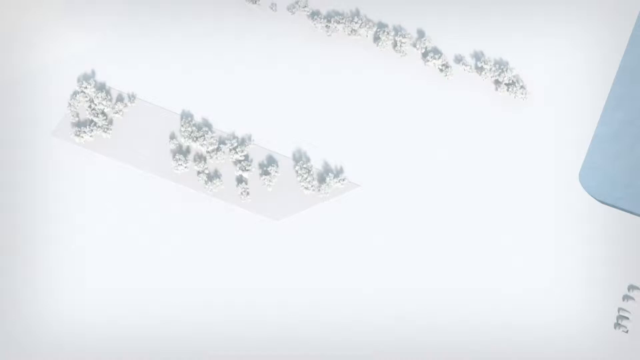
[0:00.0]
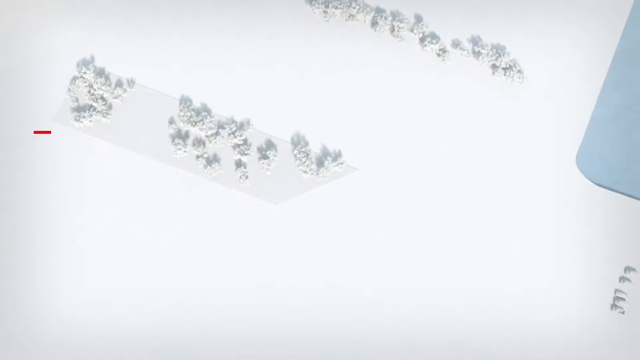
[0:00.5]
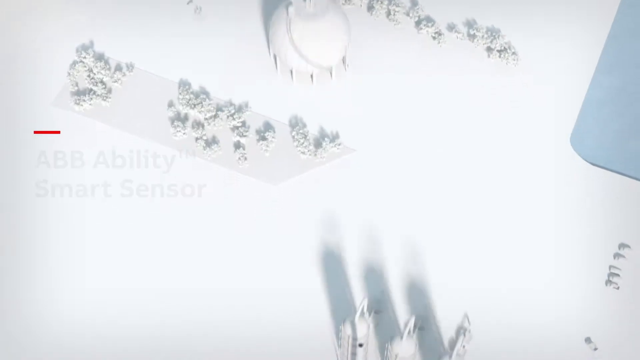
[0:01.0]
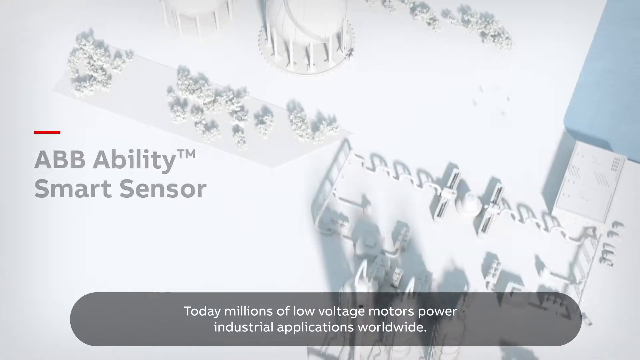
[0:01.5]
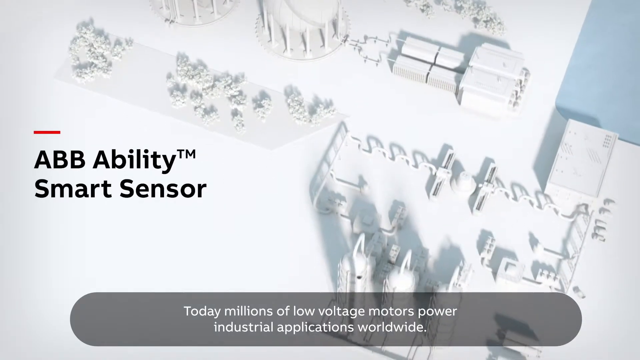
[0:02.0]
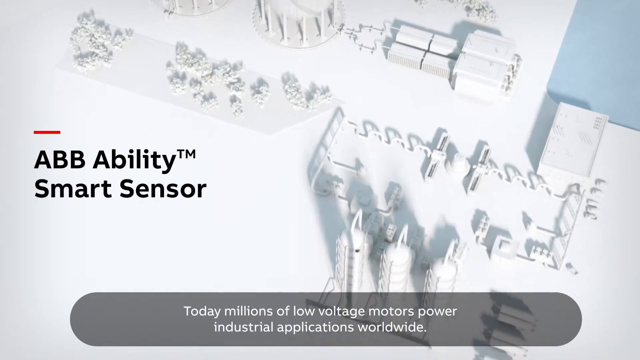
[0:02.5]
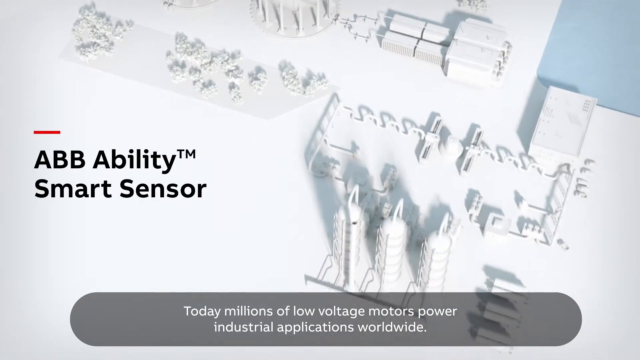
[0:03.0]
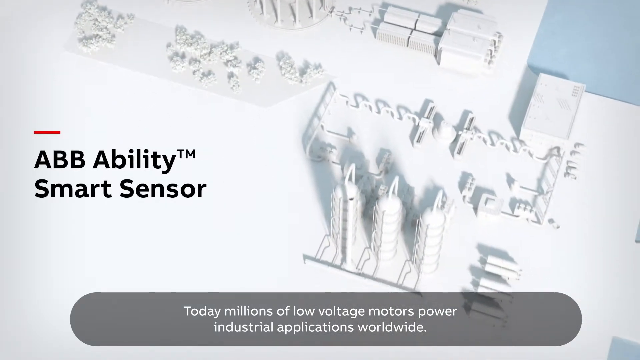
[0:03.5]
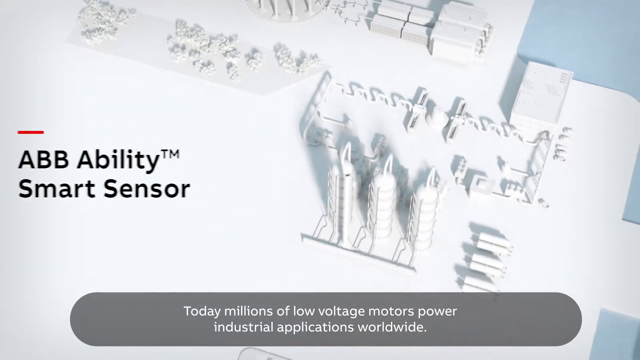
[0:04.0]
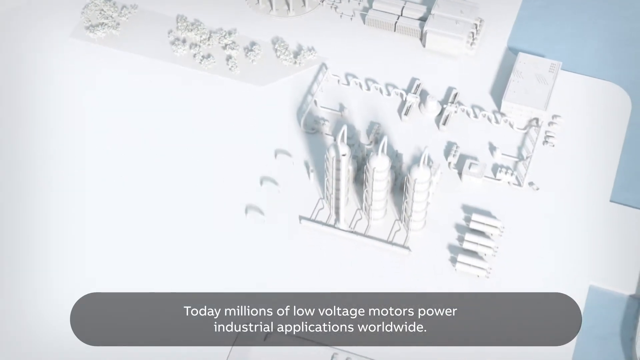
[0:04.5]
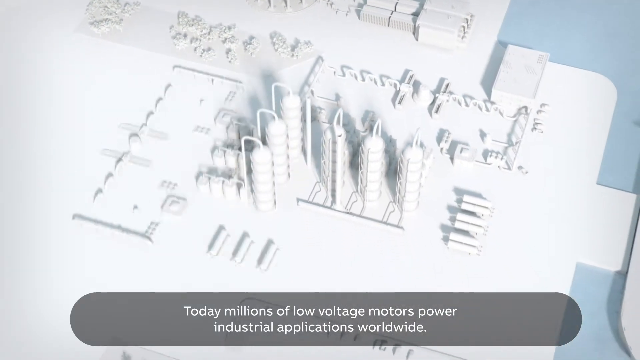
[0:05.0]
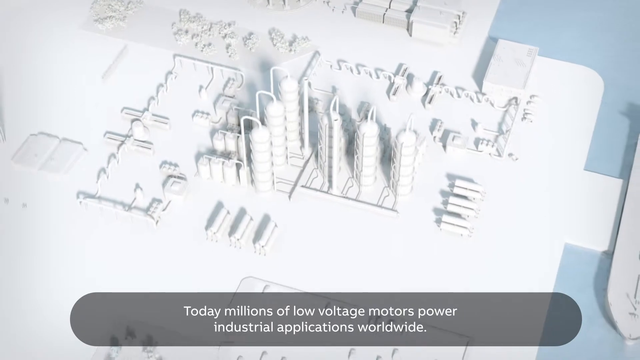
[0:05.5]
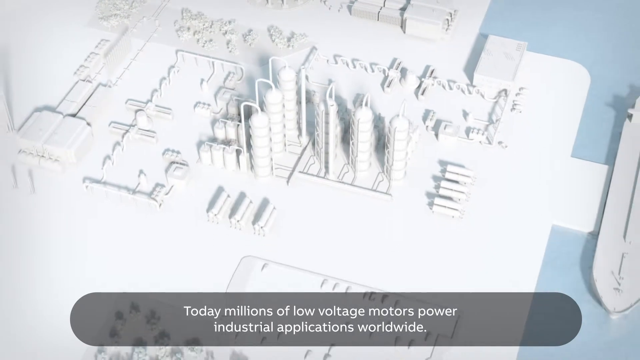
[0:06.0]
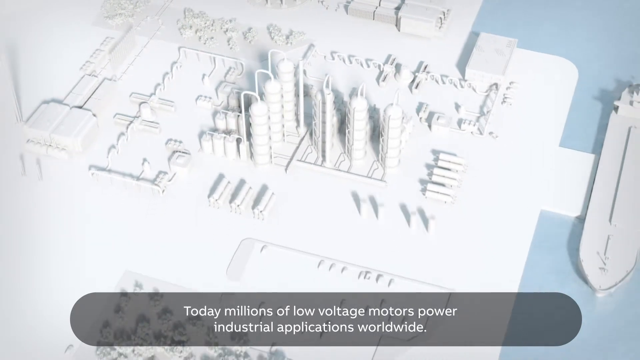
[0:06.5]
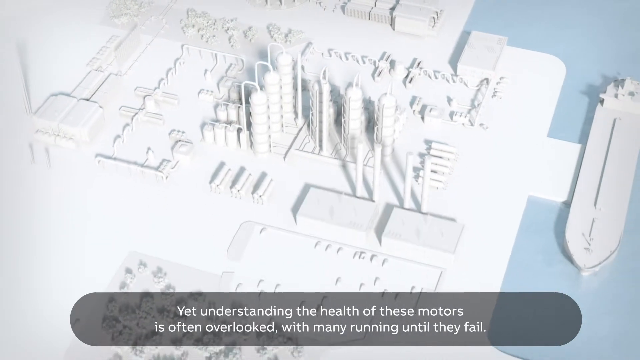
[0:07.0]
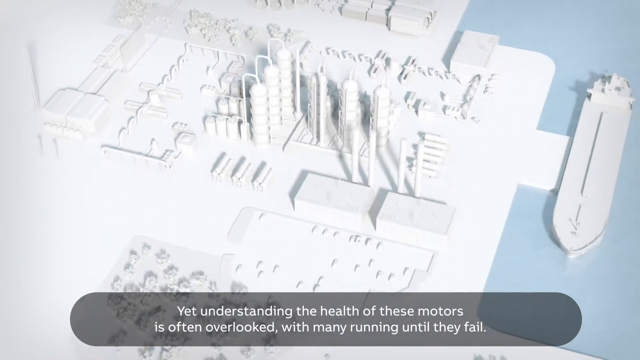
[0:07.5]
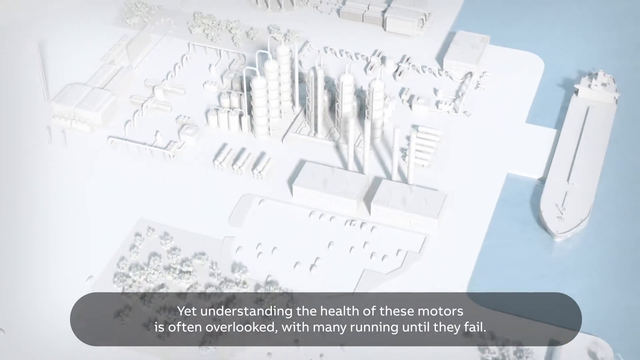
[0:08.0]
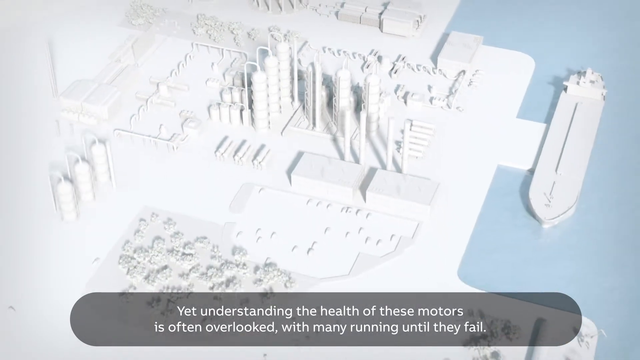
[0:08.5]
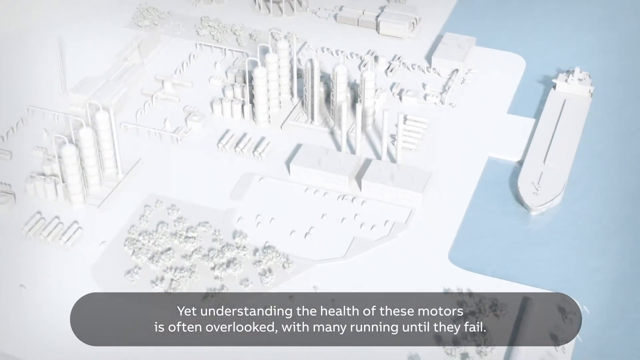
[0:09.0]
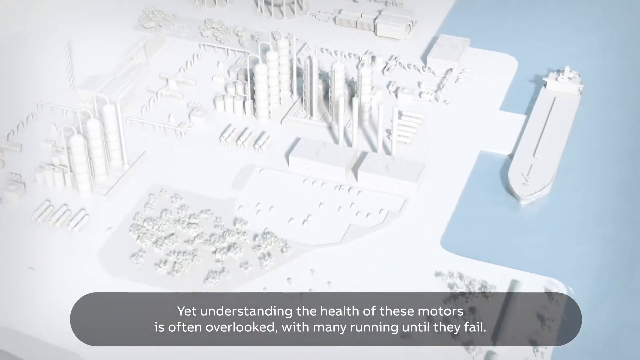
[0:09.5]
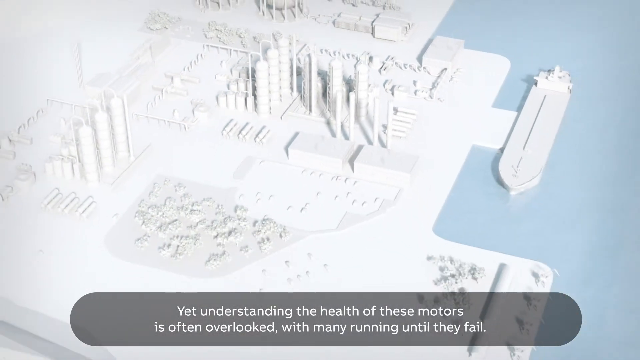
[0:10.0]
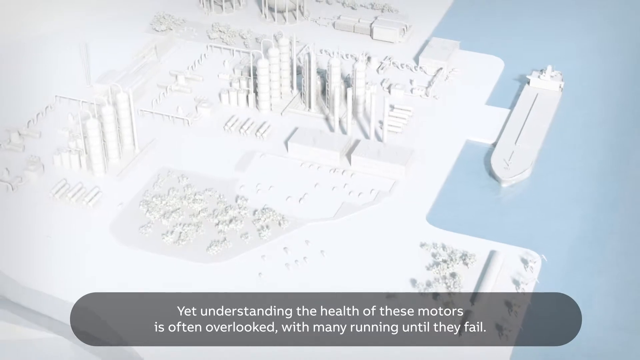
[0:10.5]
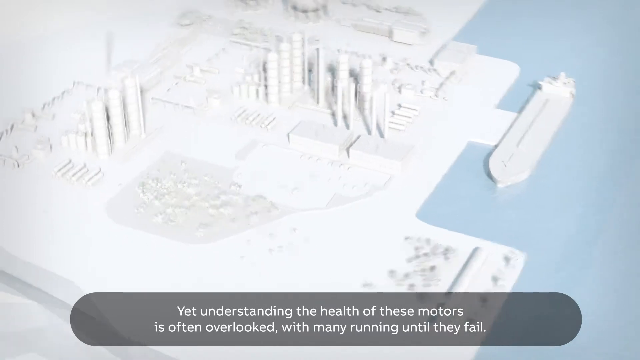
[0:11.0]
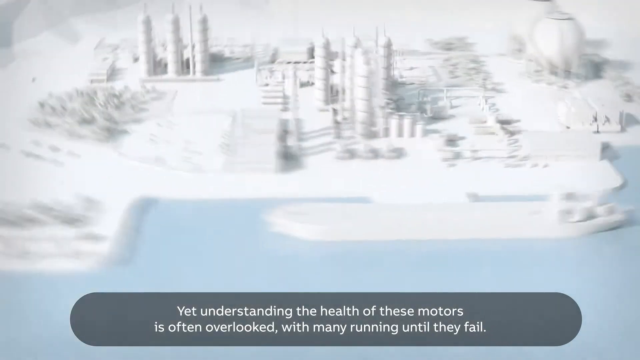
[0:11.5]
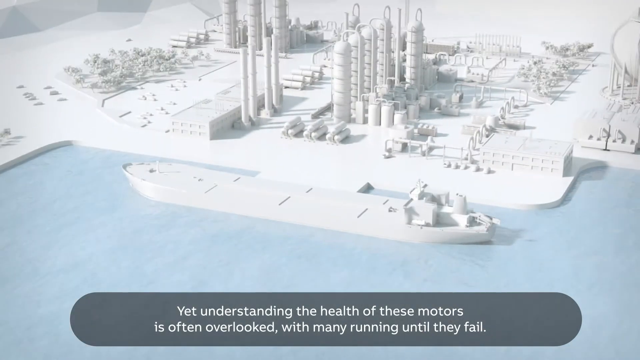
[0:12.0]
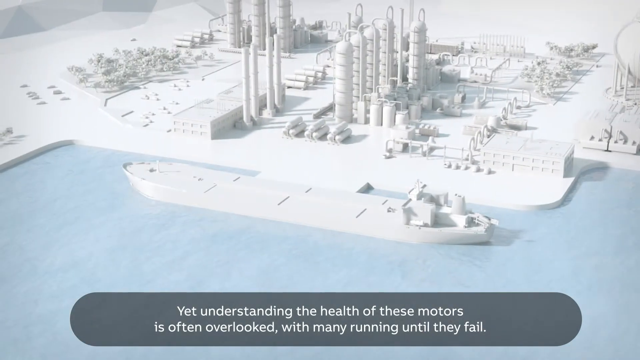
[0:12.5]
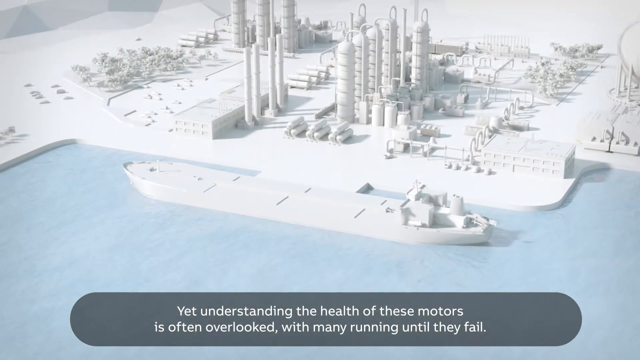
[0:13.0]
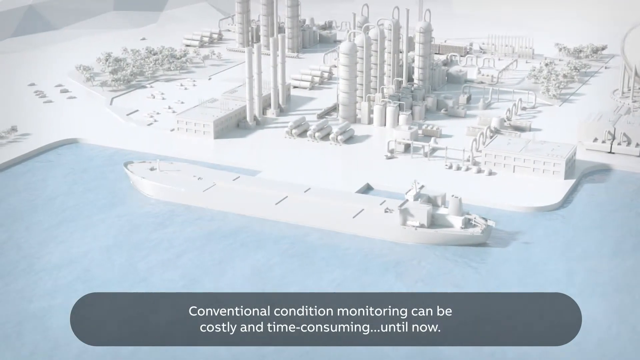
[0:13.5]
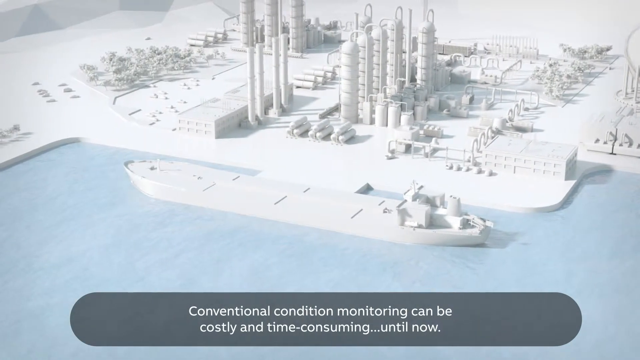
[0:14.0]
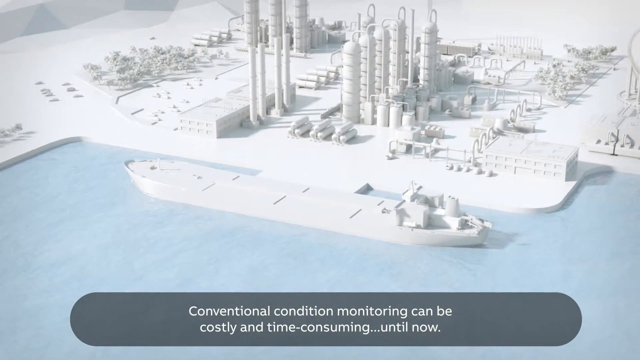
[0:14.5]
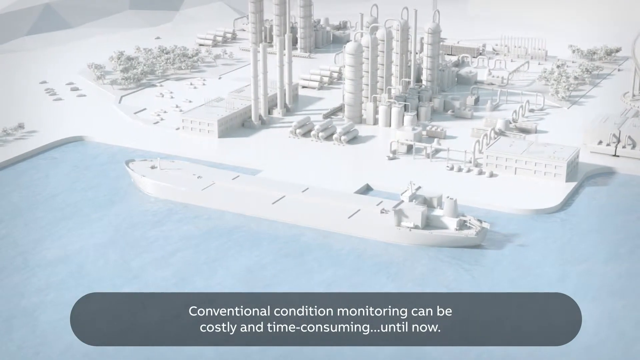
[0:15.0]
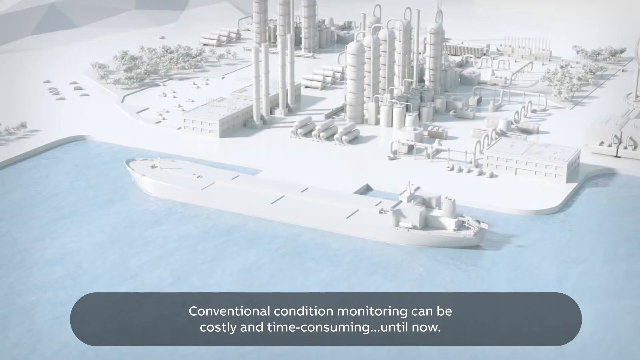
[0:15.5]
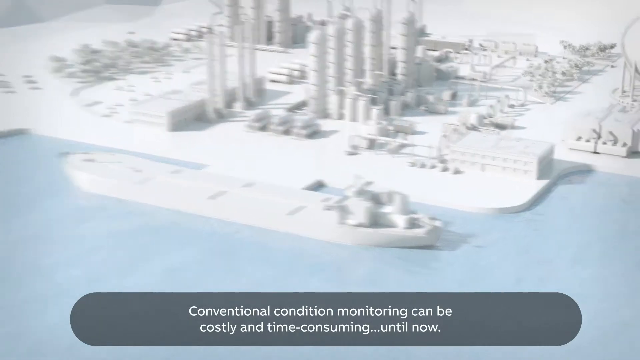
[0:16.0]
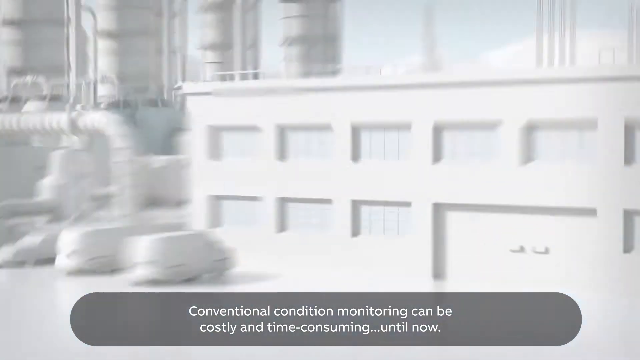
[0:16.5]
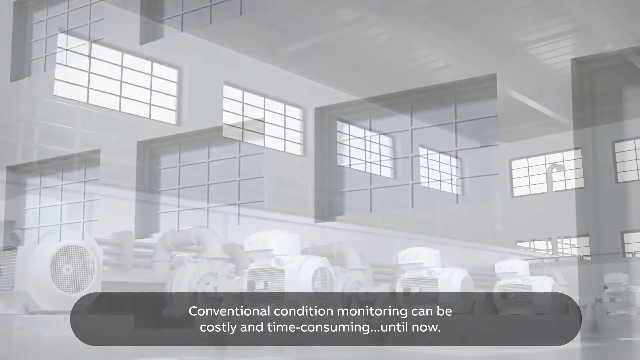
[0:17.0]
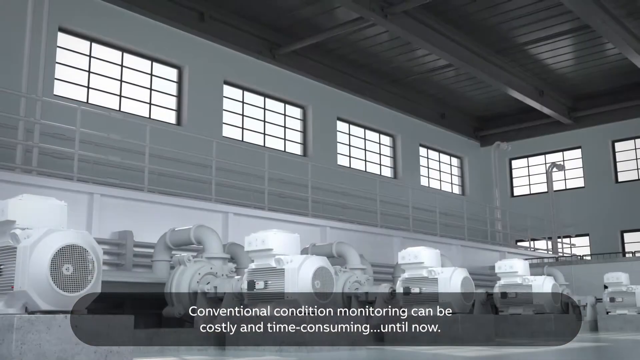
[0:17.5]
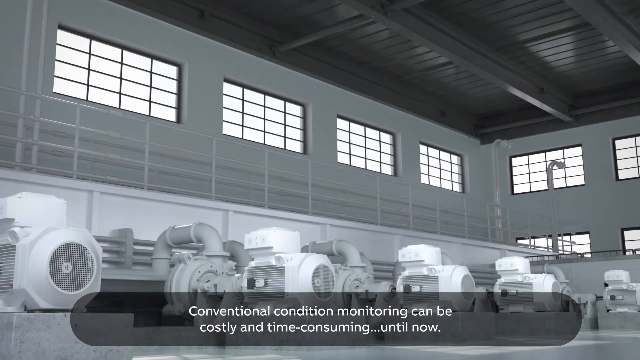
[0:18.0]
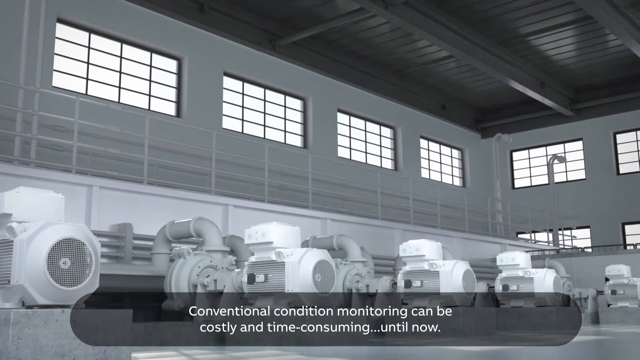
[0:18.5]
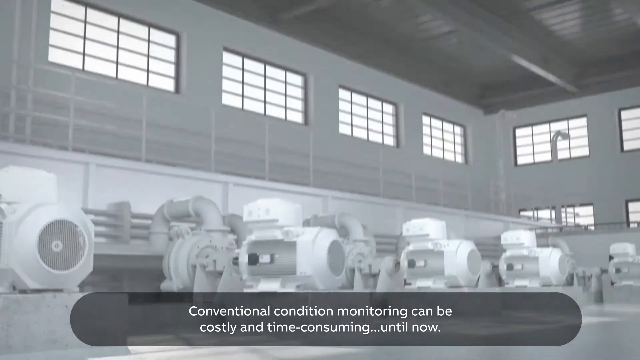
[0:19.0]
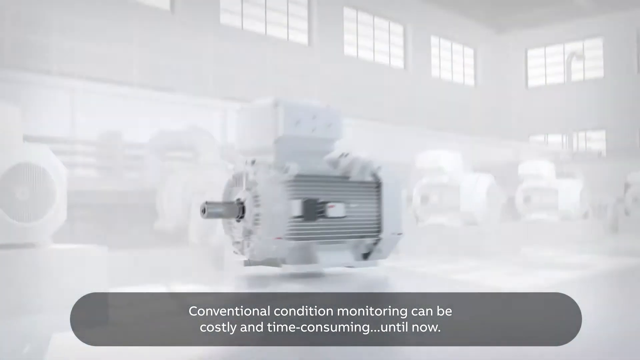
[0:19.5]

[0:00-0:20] A 3D animation shows a rendering of cities and towns erupting from the surface and growing taller. The background is white, and all the buildings and landscape are white. Words come across the left side of the screen: "ABB Ability, Trademark Smart Sensor." Below that, a bar at the bottom of the screen says "Today, millions of low-voltage motors power industrial applications worldwide." The view moves through the town and plants, and the text changes to "yet understanding the health of these motors is often overlooked with many running until they fail." The view then turns to the seaside, where there is a boat on what appears to be water because it is blue, with the text "conventional condition monitoring can be costly and time-consuming until now." The camera zooms in on the window of a building and goes inside, where there is machinery in a warehouse-style building with tall upper windows and a tall roof. The camera then zooms in on one of the machines.